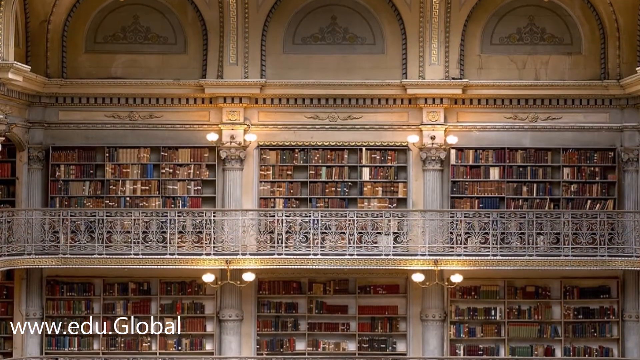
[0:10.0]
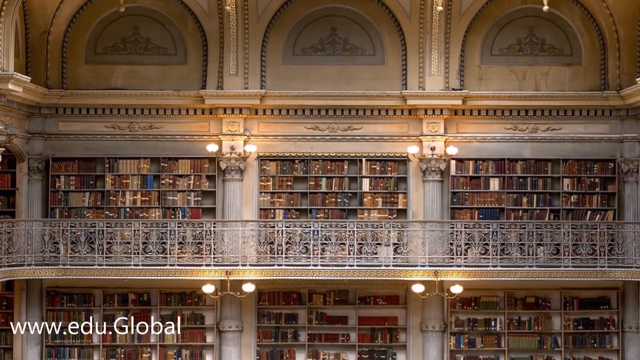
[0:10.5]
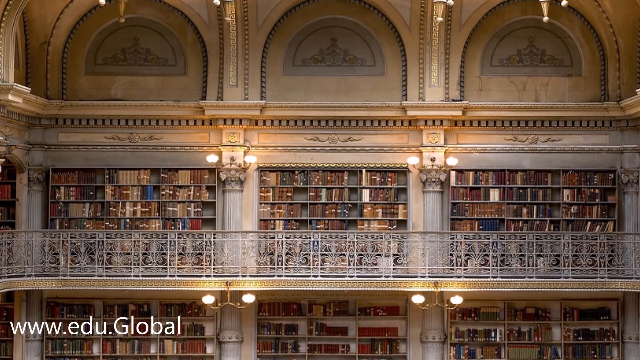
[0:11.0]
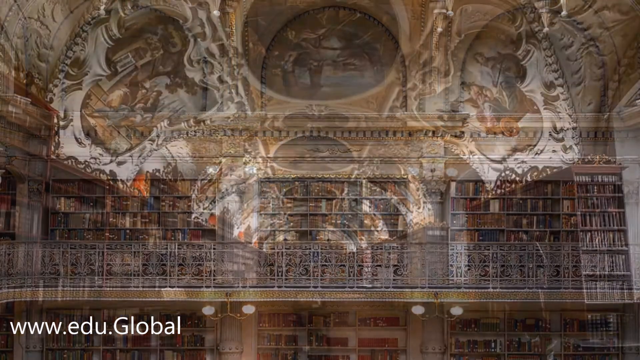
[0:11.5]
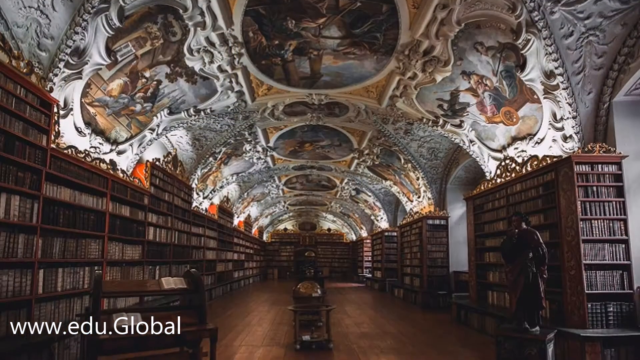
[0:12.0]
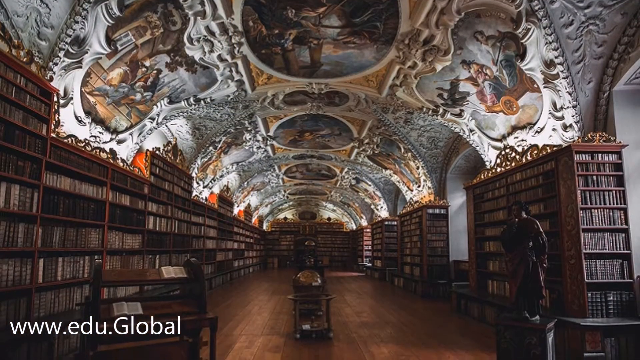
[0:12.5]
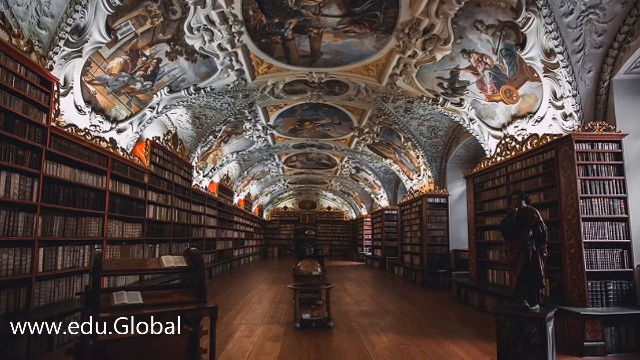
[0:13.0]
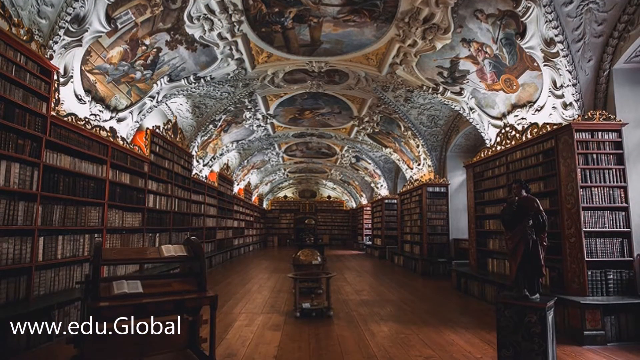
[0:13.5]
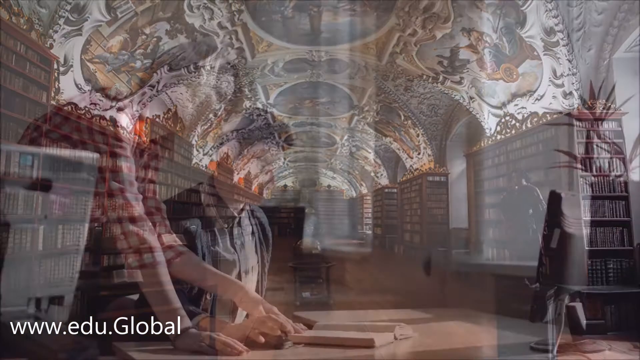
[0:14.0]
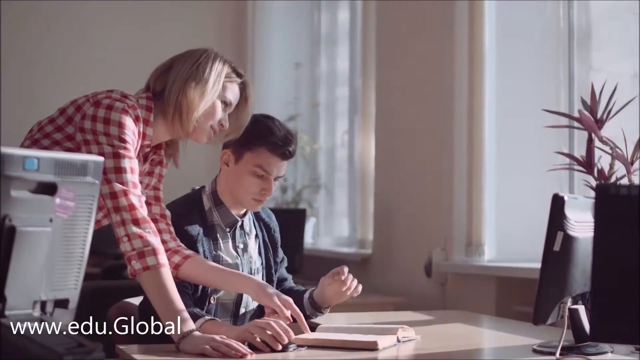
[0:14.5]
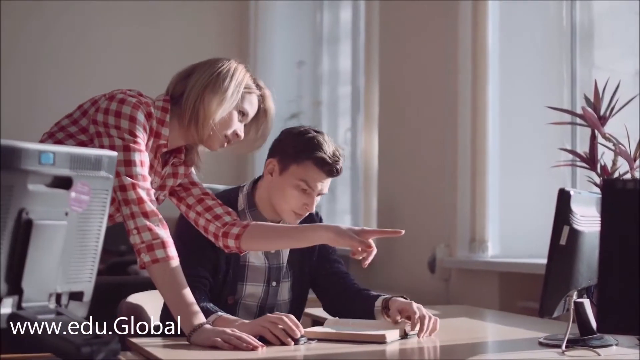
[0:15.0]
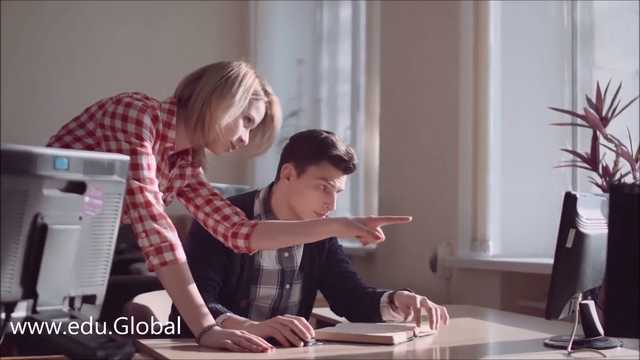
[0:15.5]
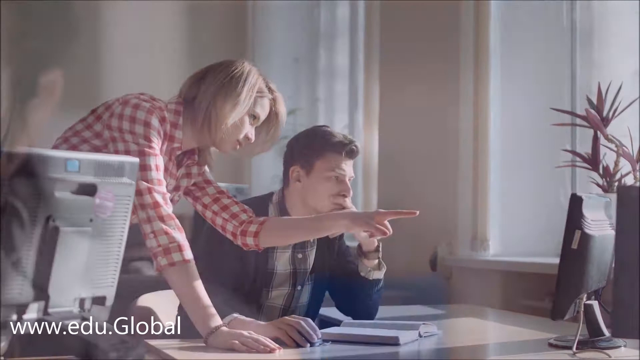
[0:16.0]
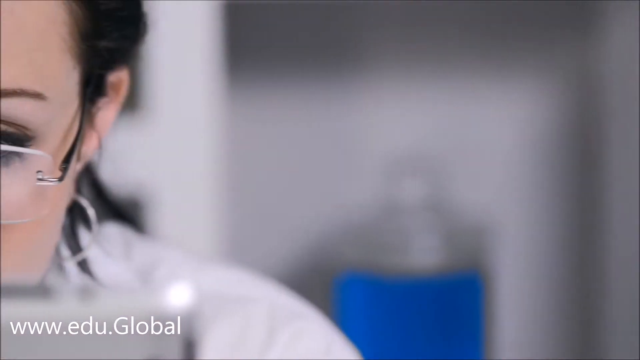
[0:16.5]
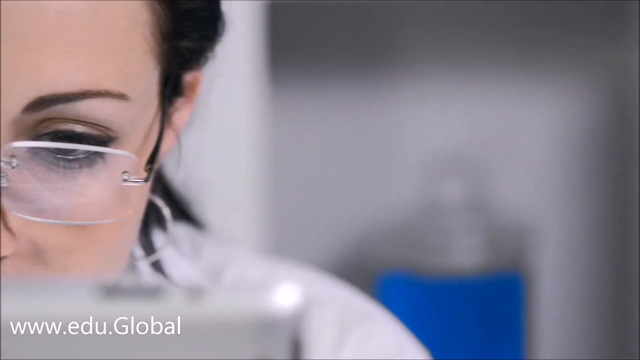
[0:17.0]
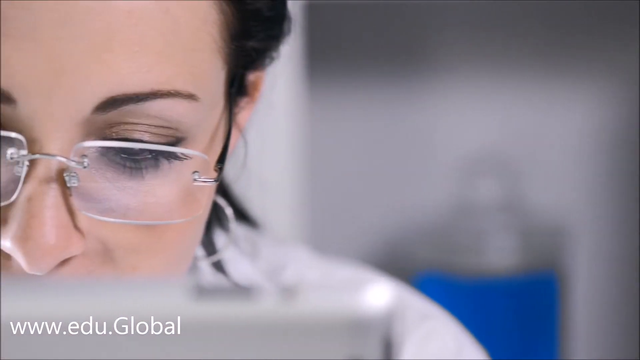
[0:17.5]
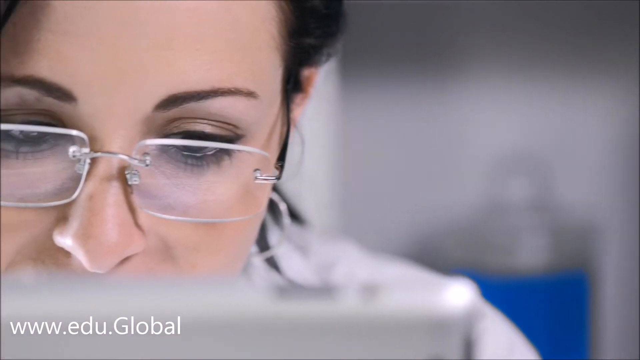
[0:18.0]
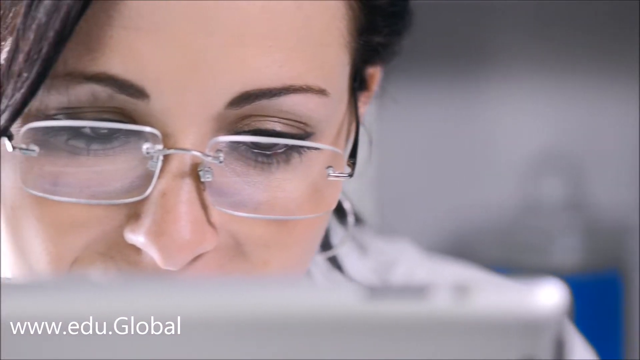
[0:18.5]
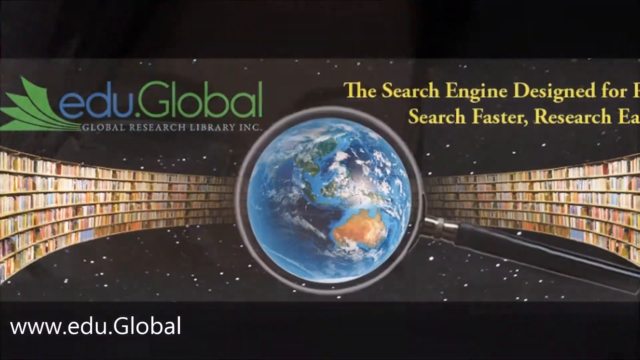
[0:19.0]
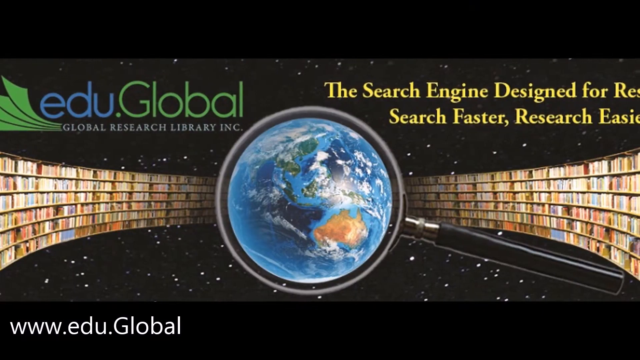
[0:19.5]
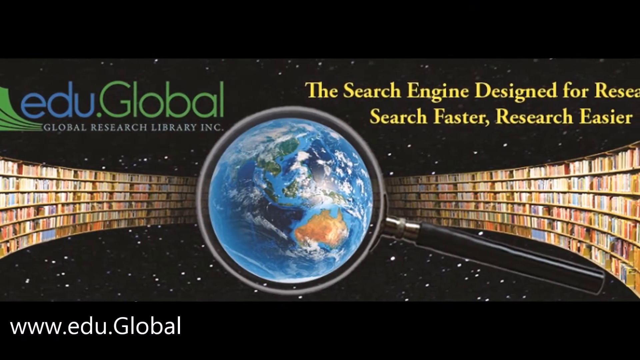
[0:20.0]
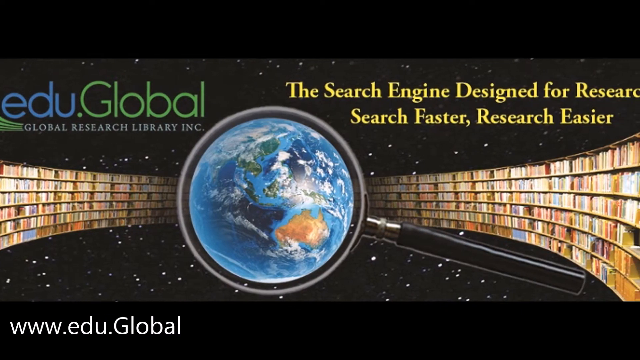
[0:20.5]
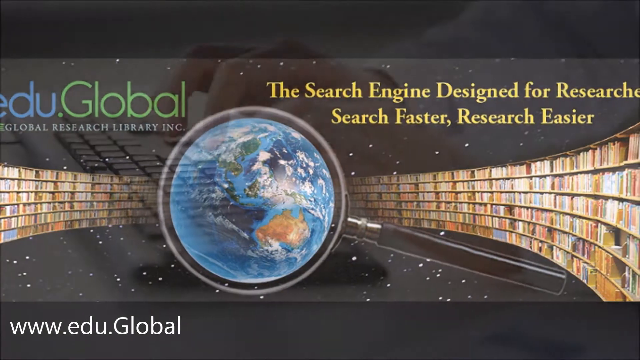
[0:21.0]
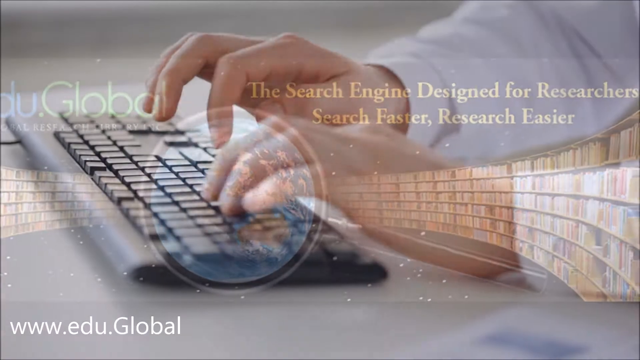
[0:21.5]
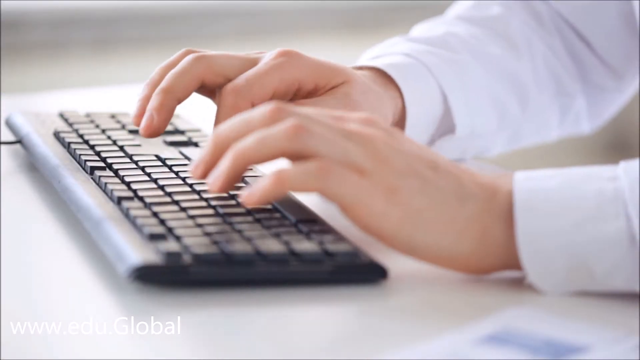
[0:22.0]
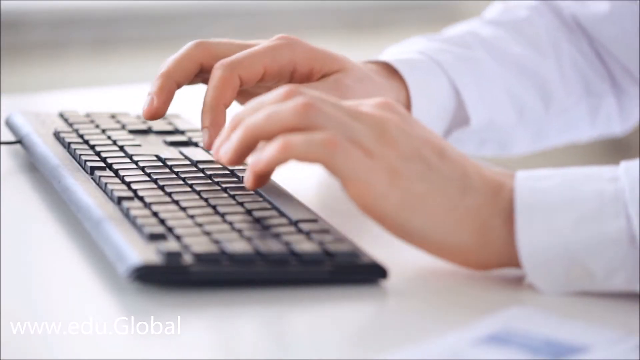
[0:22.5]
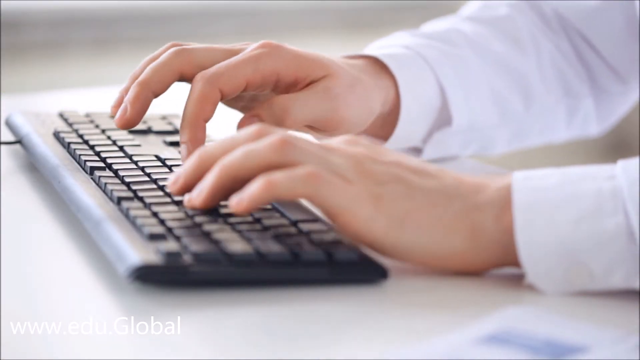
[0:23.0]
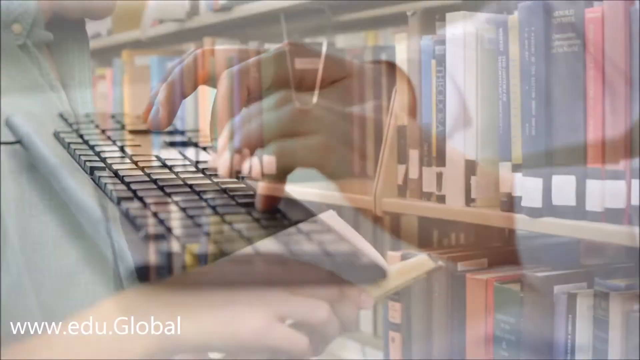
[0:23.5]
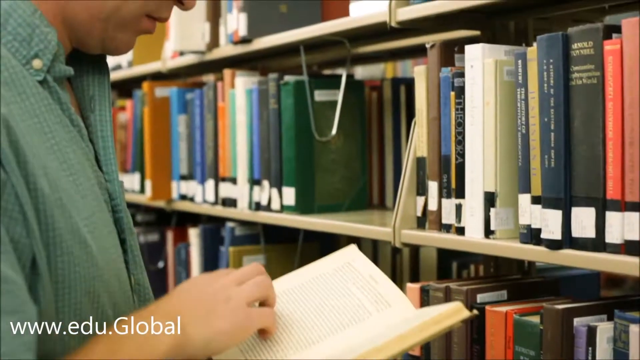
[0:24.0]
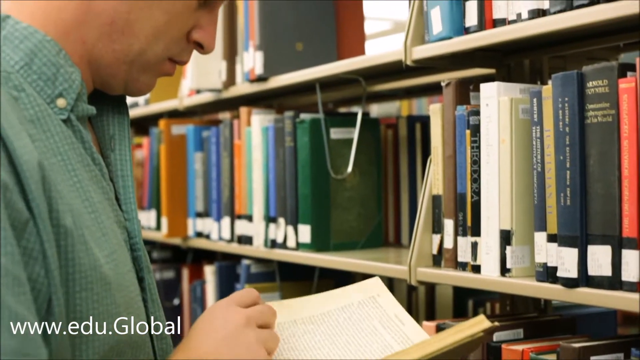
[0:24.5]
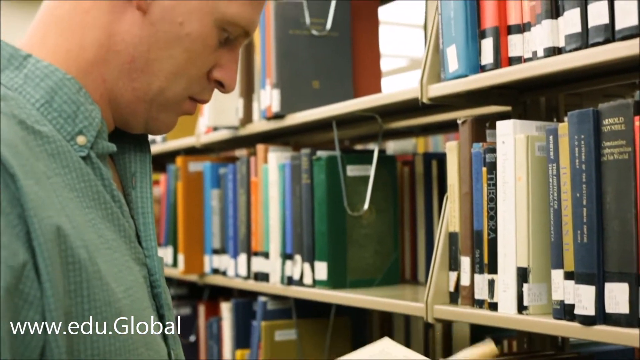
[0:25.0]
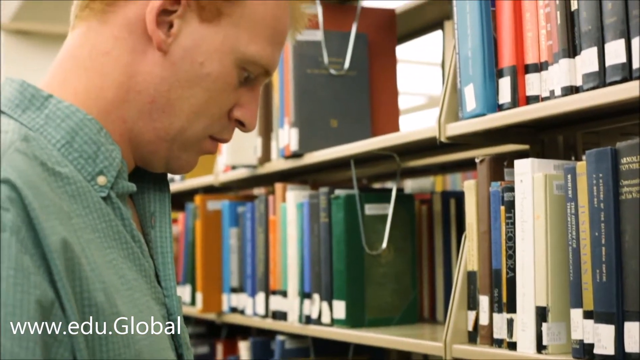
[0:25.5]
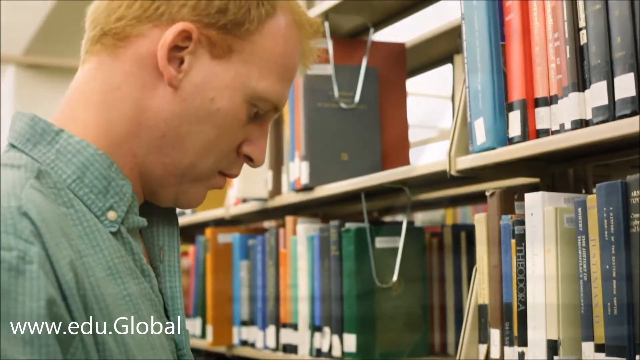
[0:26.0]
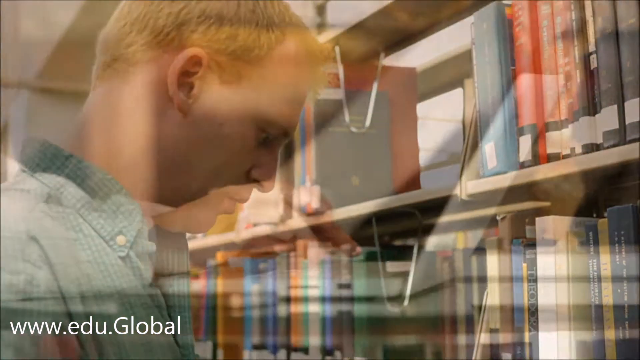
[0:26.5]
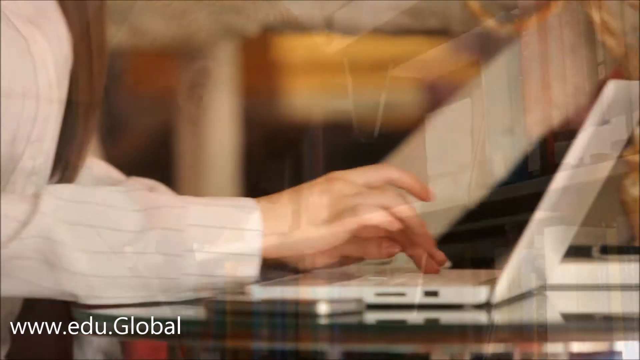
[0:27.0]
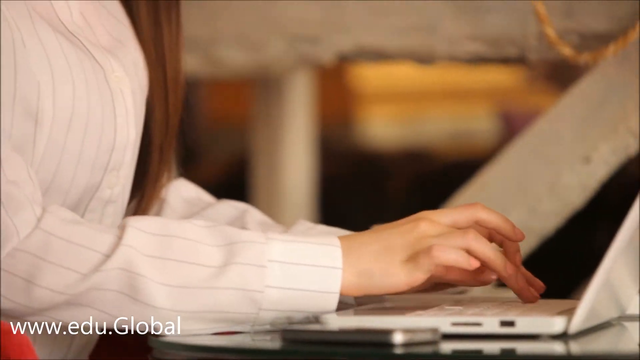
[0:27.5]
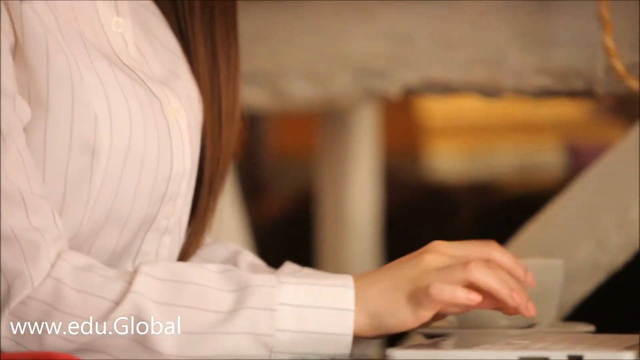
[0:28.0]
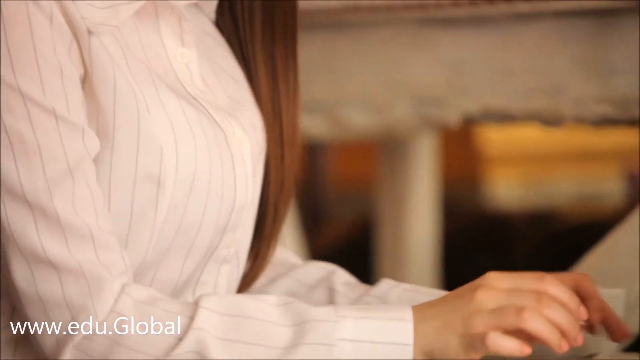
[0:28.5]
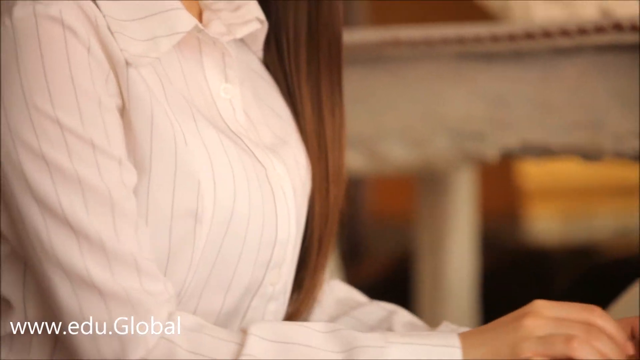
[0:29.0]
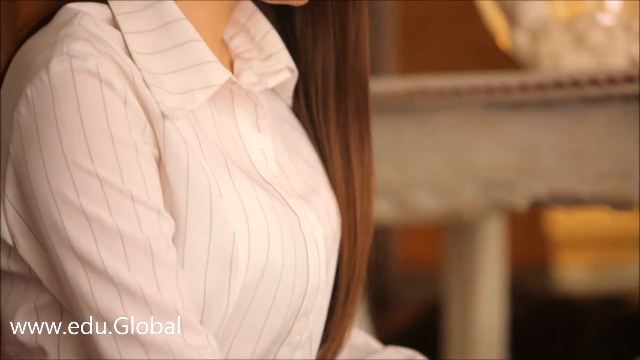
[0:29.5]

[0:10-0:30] More images of very elegant, old bookstores follow. One shows three shelves on the second floor of a bookstore, full of books, with silver-colored railings along the space. Another, even more impressive, shows a bookstore full of shelves of books, with several religious-looking paintings on the oval roof that look like the work of Michelangelo or someone similar. A short film shows a woman with shoulder-length blond hair showing something to what appears to be a student in front of a monitor. Then a woman with glasses is very focused on something and seems to be typing on a keyboard. A man reads a book in front of a shelf, and another woman works on her laptop.